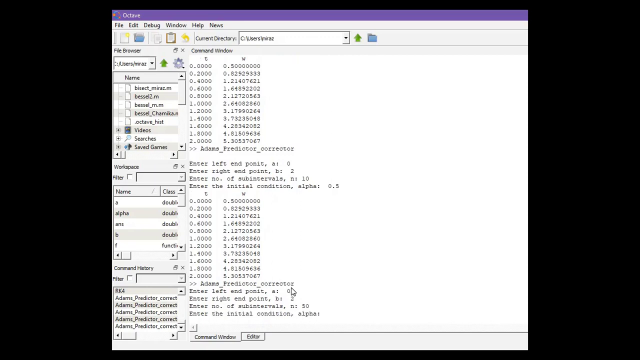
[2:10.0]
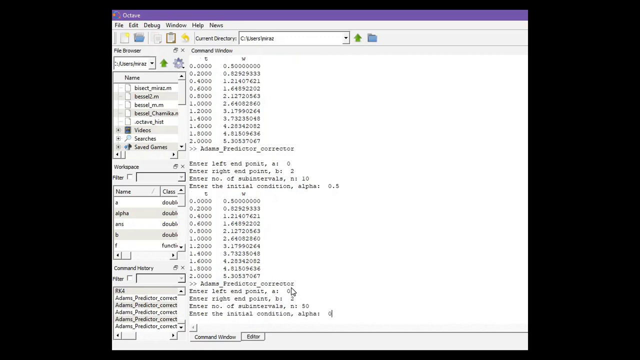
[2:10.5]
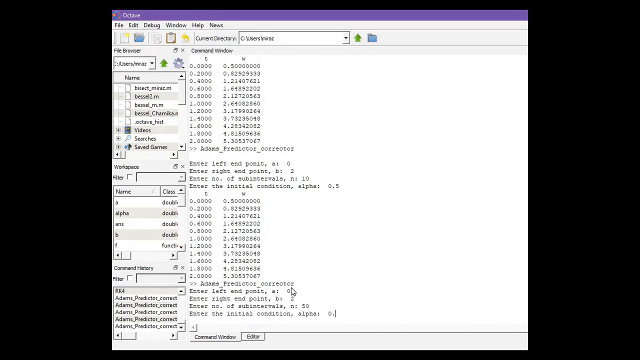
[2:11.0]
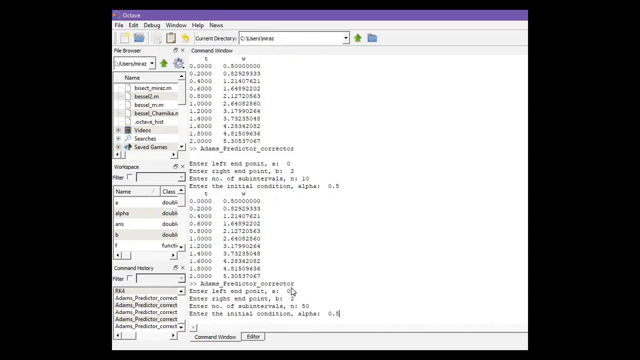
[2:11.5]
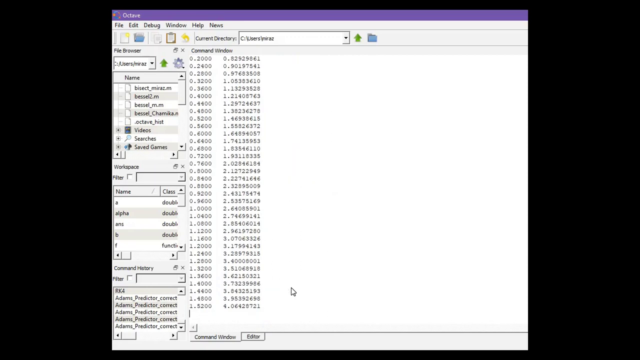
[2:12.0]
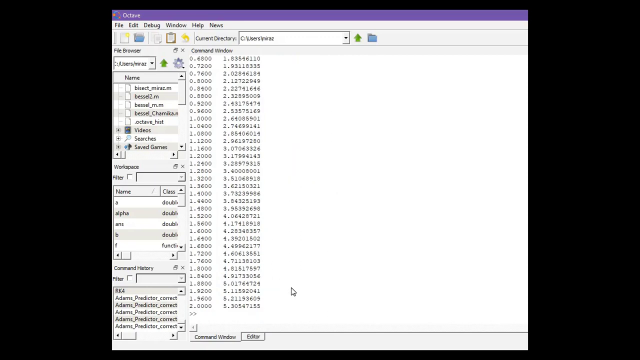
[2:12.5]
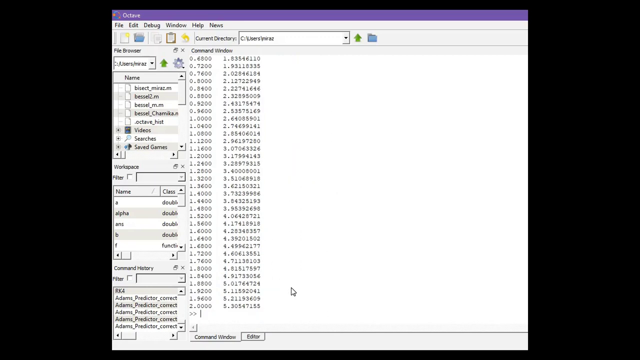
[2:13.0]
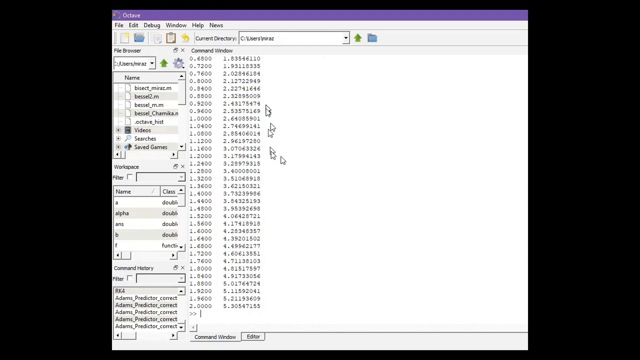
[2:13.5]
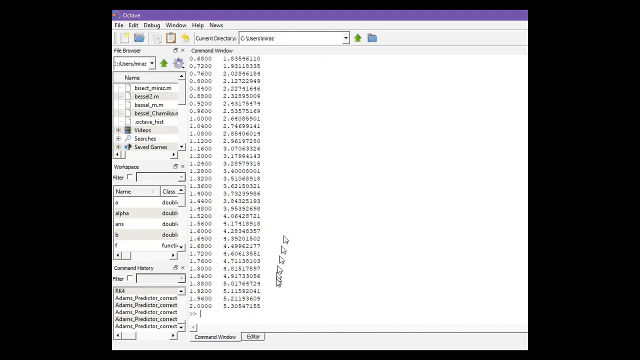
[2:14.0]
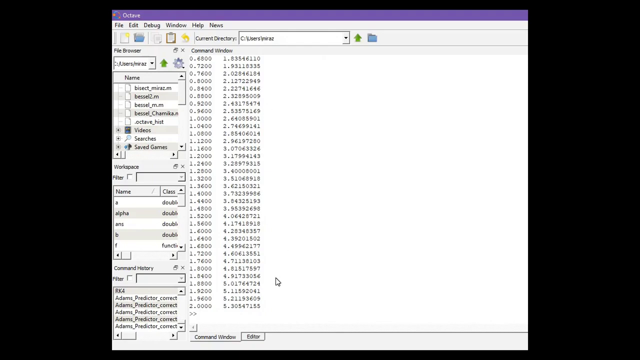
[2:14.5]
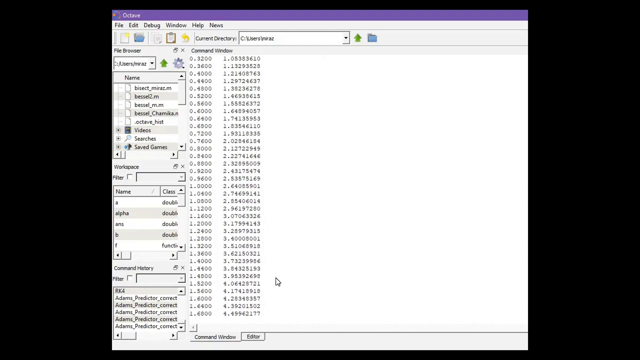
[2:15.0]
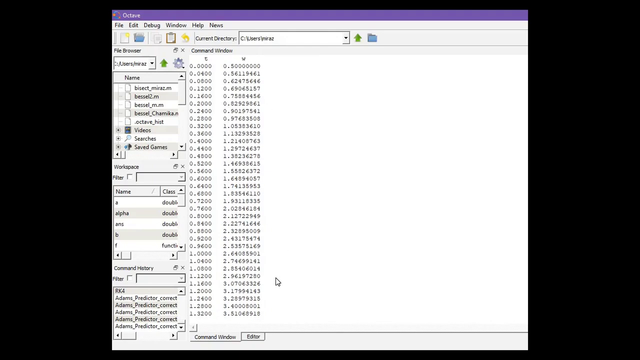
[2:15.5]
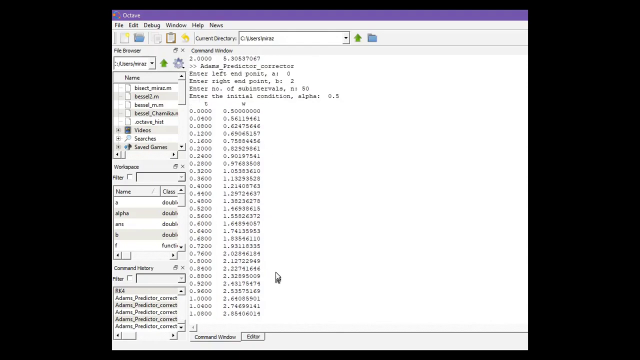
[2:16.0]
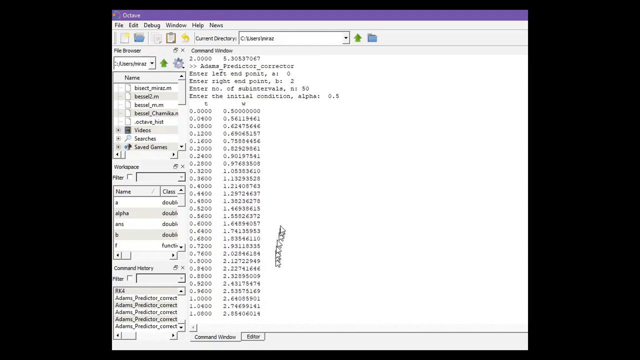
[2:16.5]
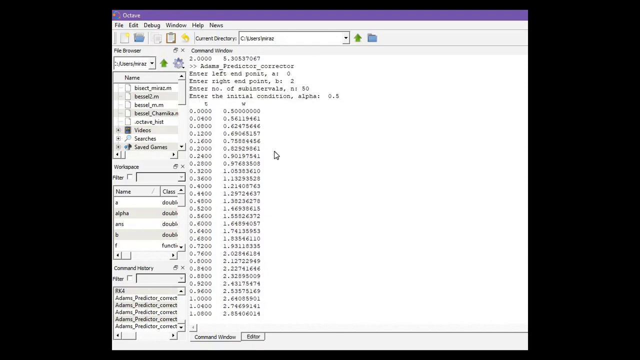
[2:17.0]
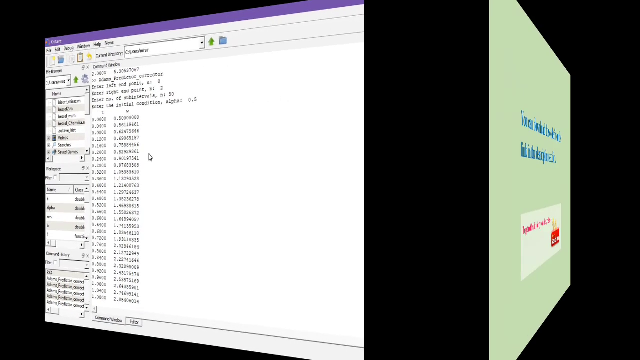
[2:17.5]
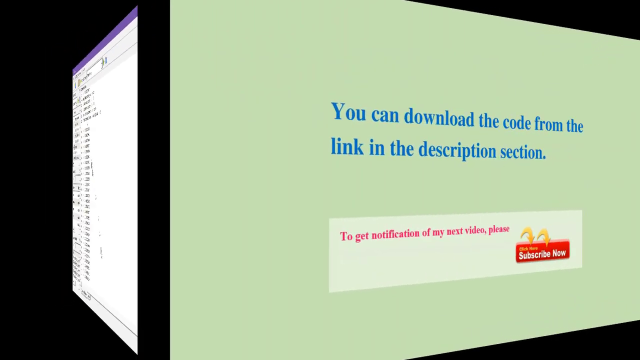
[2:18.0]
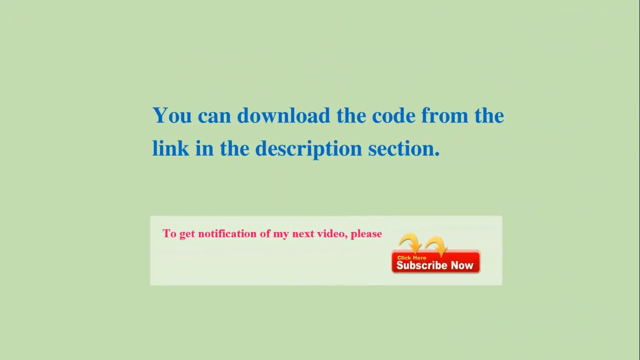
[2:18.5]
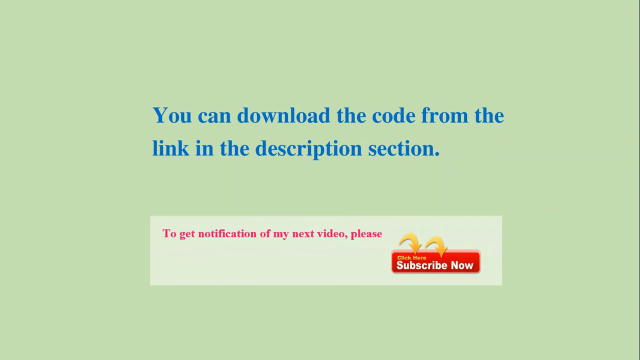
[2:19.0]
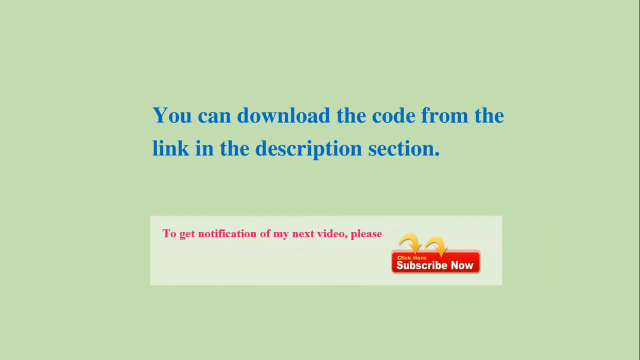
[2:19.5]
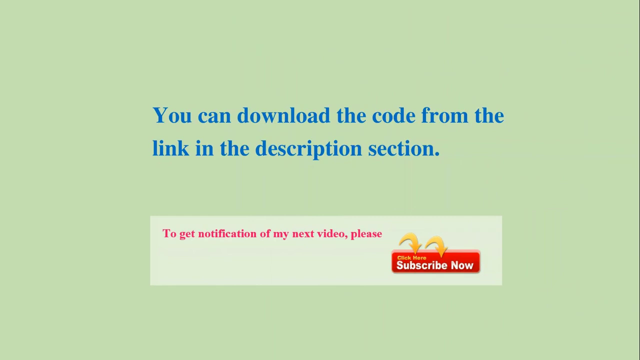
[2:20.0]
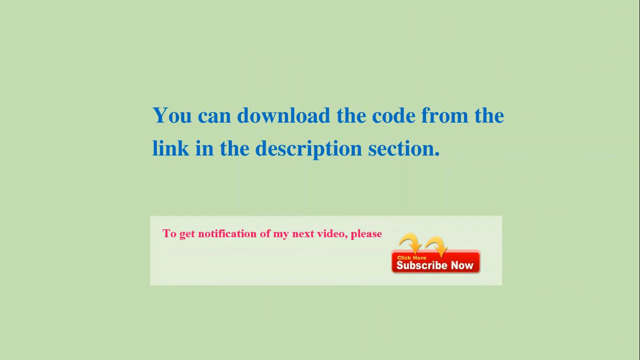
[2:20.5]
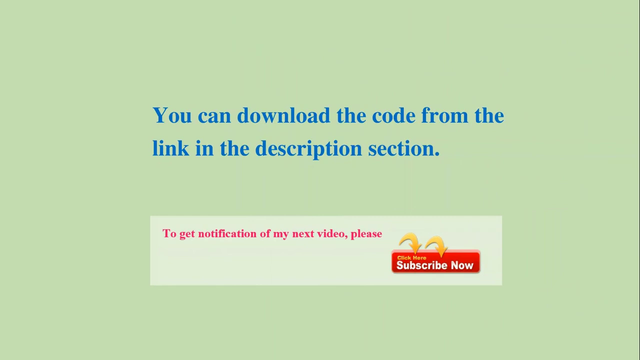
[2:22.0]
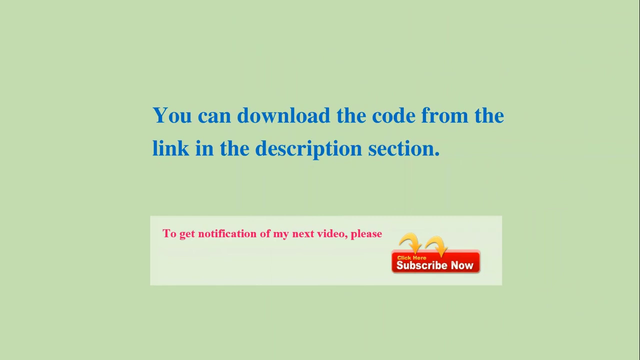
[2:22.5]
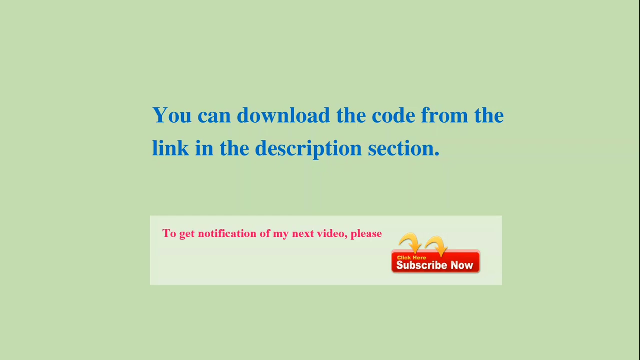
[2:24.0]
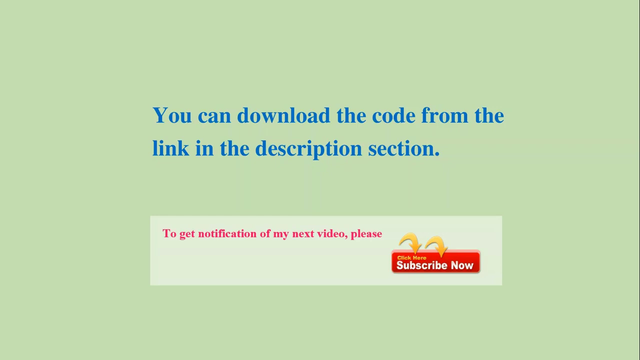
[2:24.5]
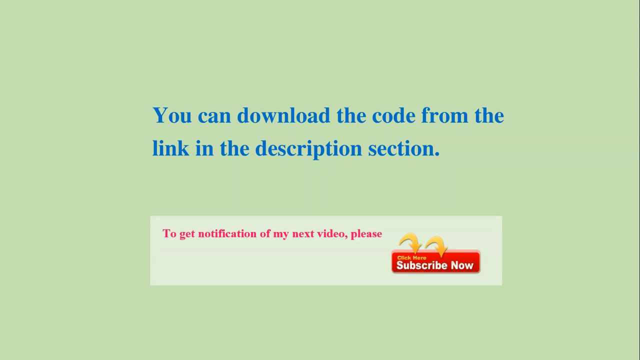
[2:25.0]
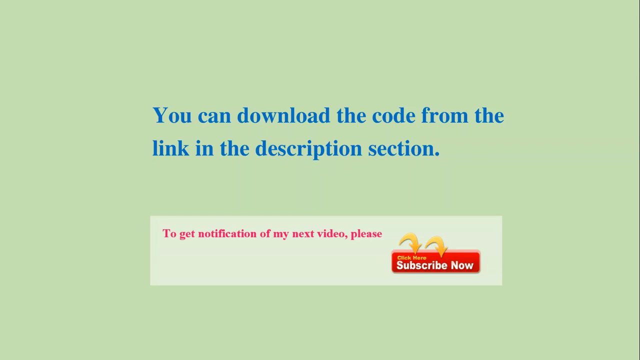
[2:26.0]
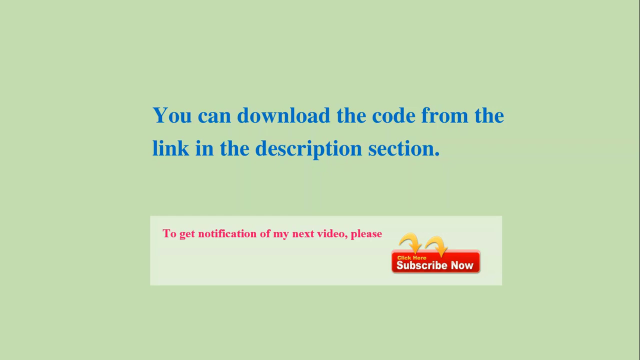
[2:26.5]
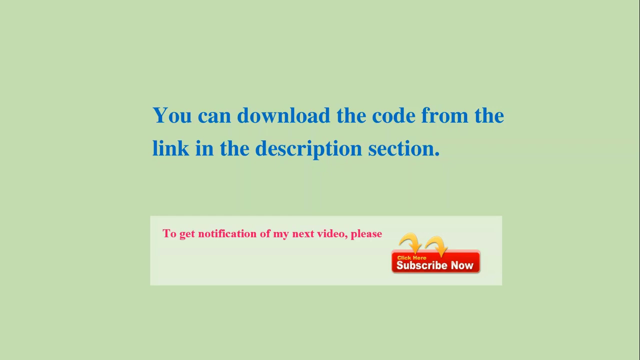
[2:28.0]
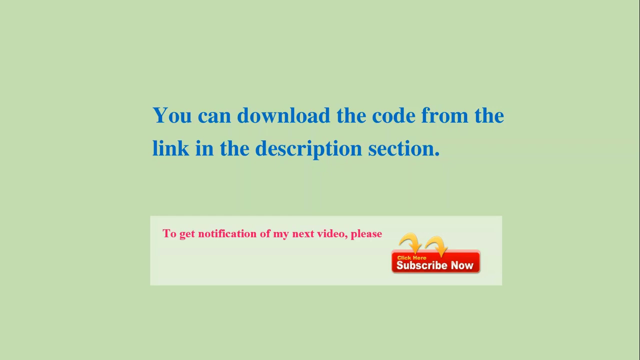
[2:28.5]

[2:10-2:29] A text document with a bunch of lines of mathematical code is shown, and the highly visible mouse pointer leaves a trail behind it as it moves across the screen. Underneath the command window line, the view scrolls through a lot of entered code made up entirely of numbers, from zero up to nine. At the bottom left, the command window tab is selected, and to its right is an editor tab. The document appears to have been opened from the C users folder. The buttons at the top include file, edit, debug, window, help, and news. The video ends with an end screen that says "you can download the code from the link in the description section" and "to get notified of my next video, please subscribe now."